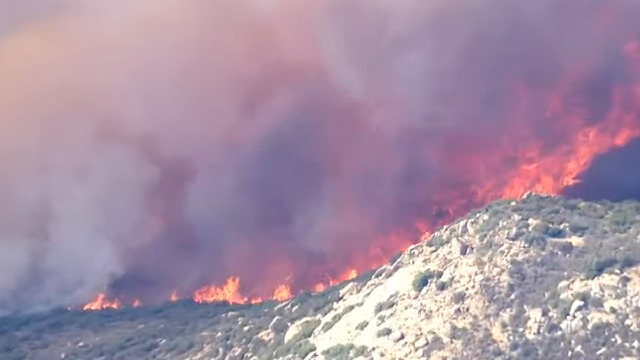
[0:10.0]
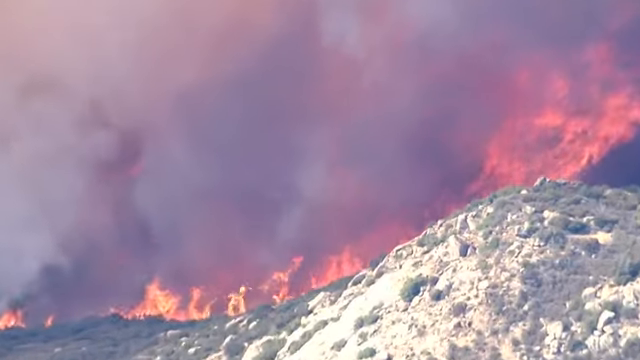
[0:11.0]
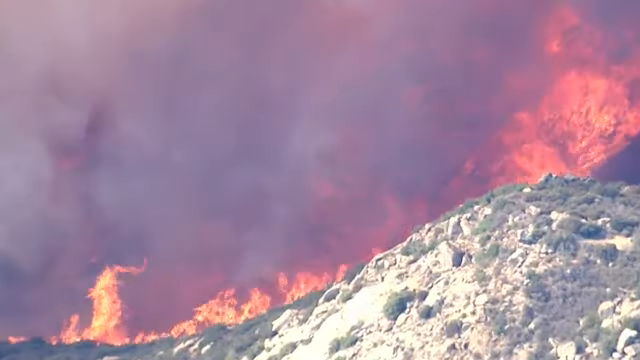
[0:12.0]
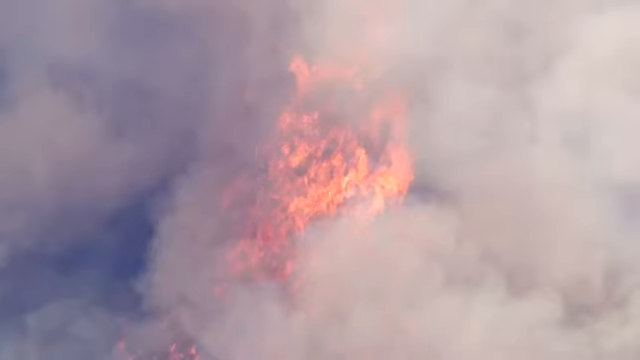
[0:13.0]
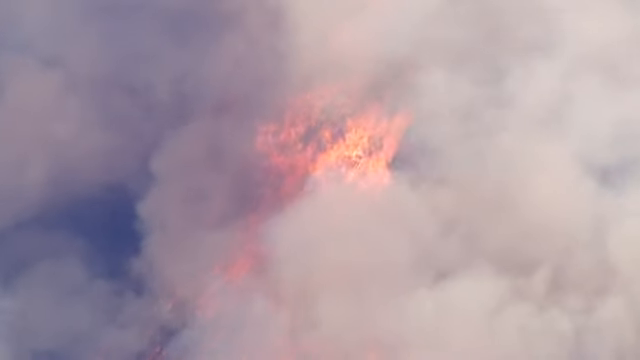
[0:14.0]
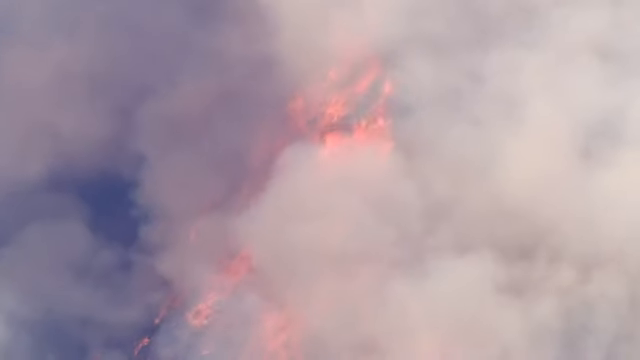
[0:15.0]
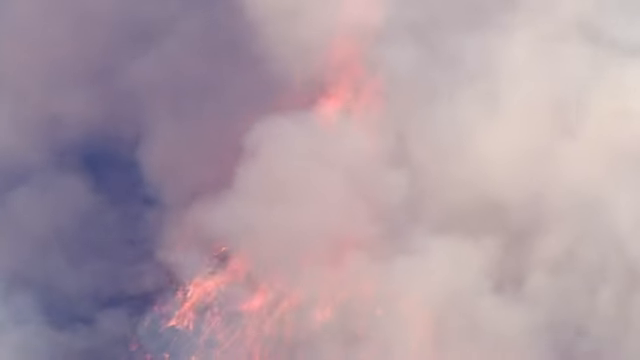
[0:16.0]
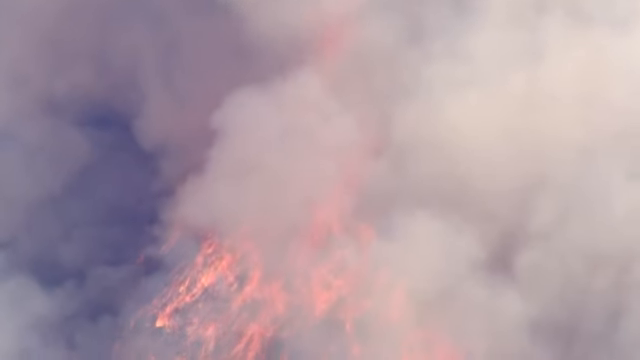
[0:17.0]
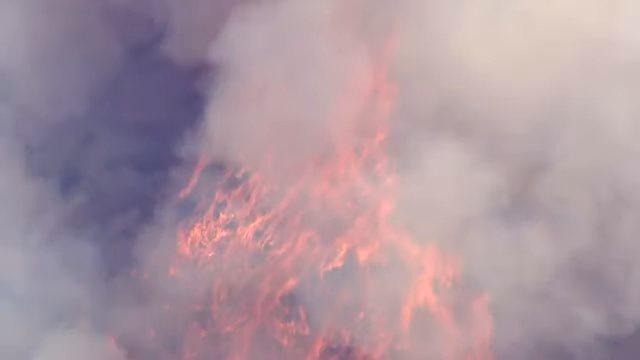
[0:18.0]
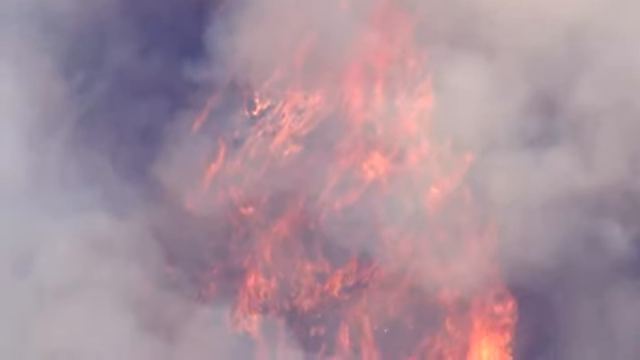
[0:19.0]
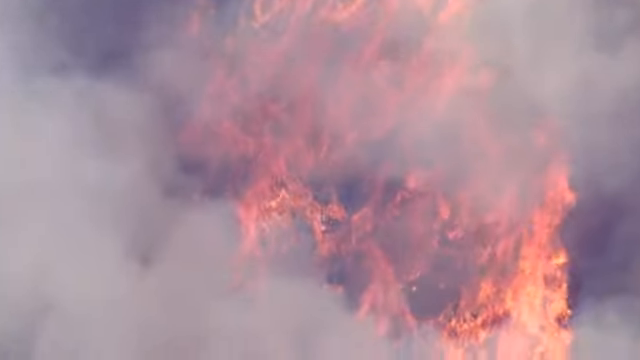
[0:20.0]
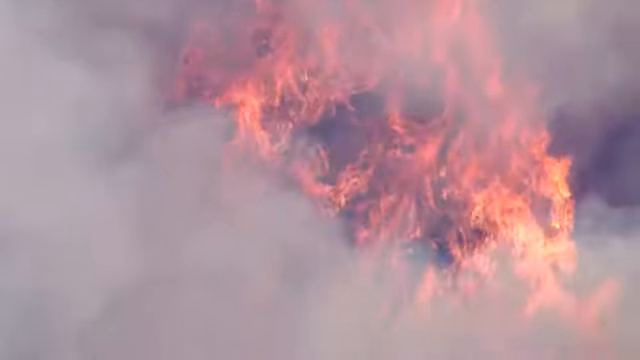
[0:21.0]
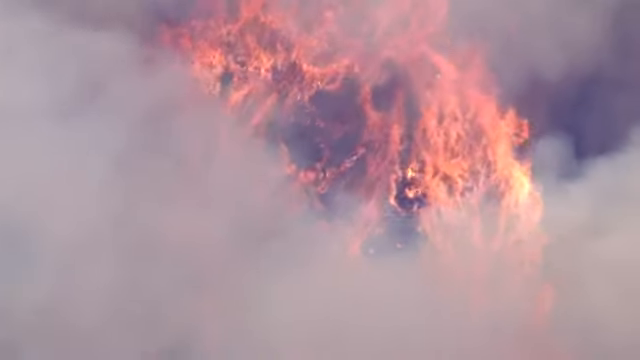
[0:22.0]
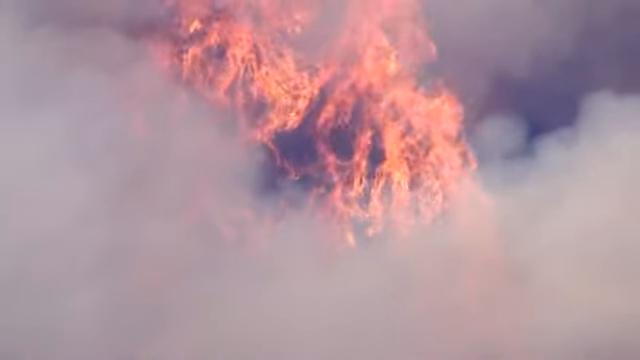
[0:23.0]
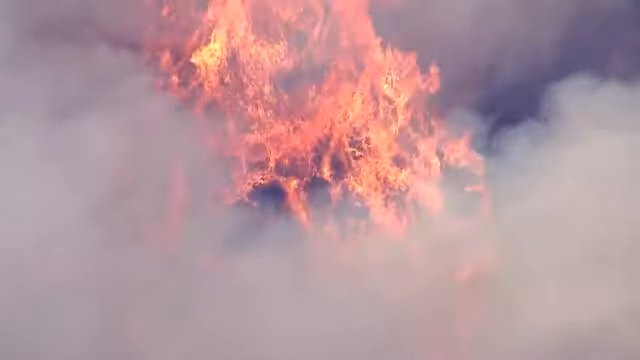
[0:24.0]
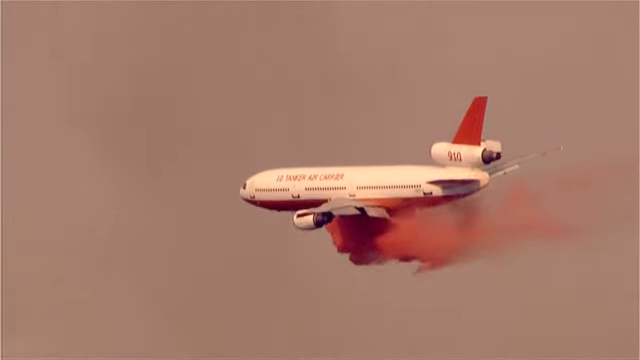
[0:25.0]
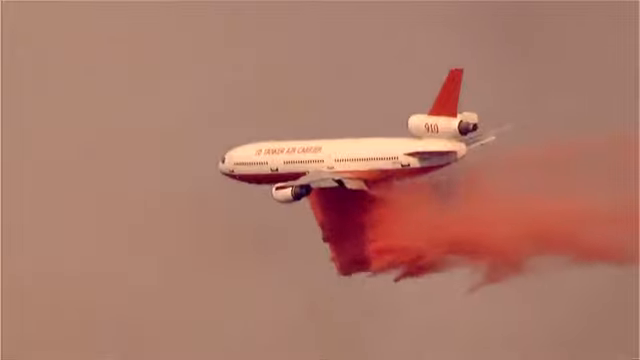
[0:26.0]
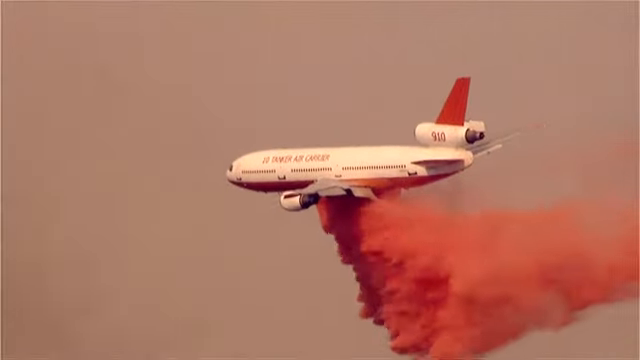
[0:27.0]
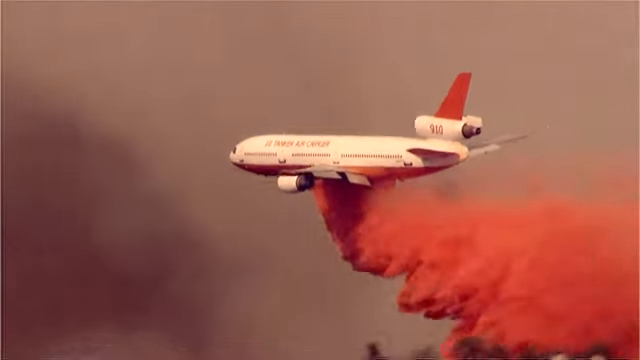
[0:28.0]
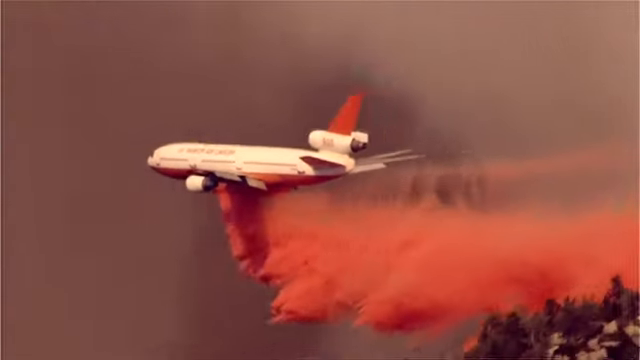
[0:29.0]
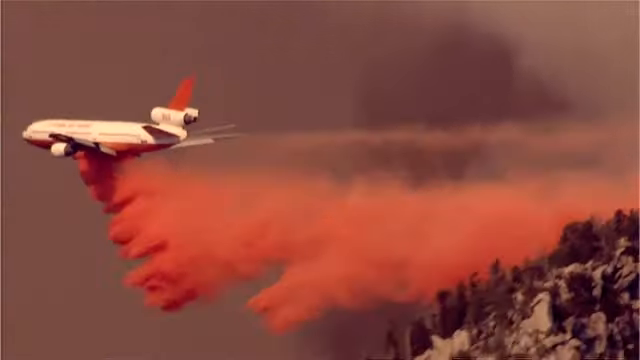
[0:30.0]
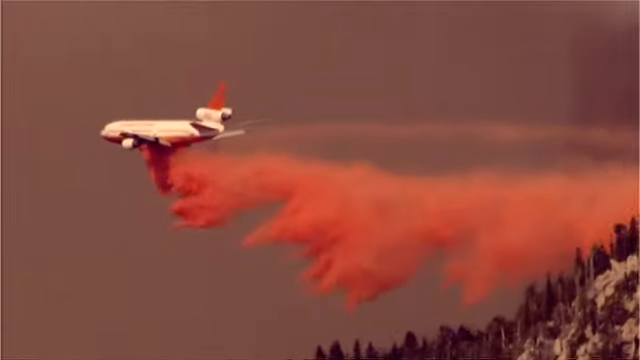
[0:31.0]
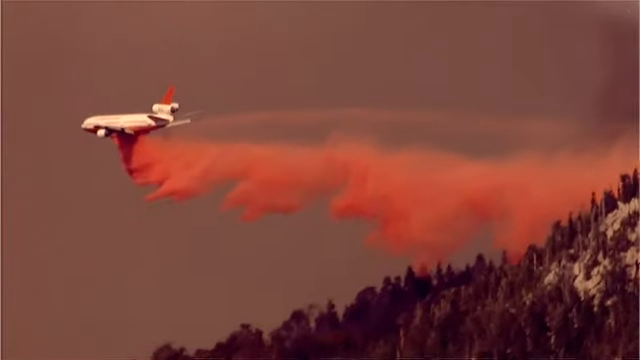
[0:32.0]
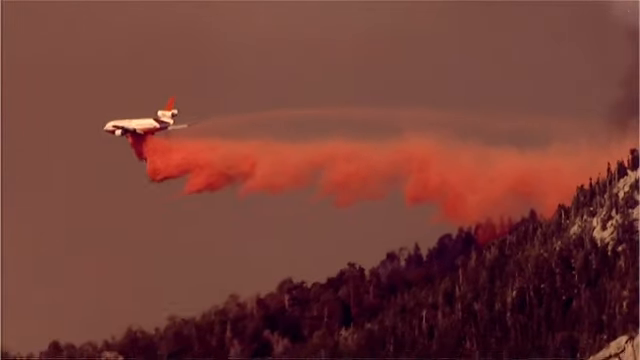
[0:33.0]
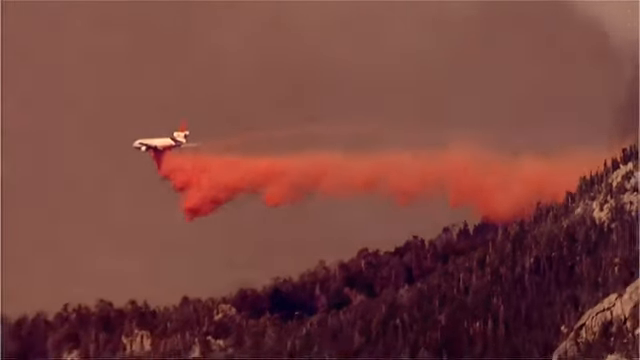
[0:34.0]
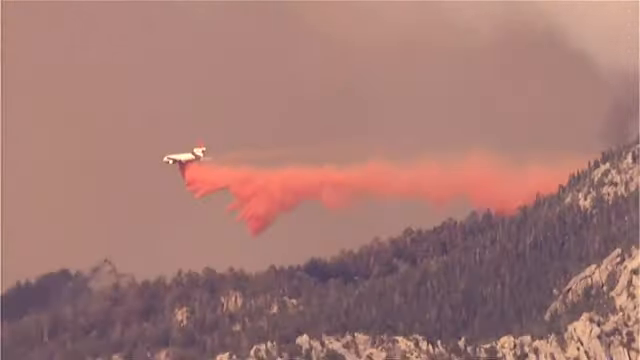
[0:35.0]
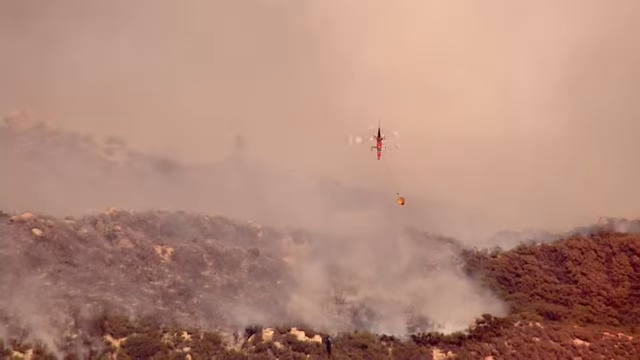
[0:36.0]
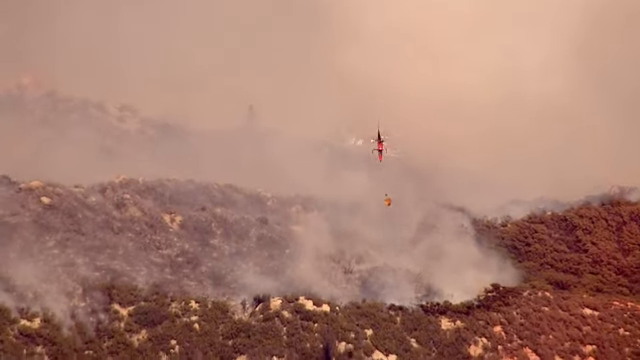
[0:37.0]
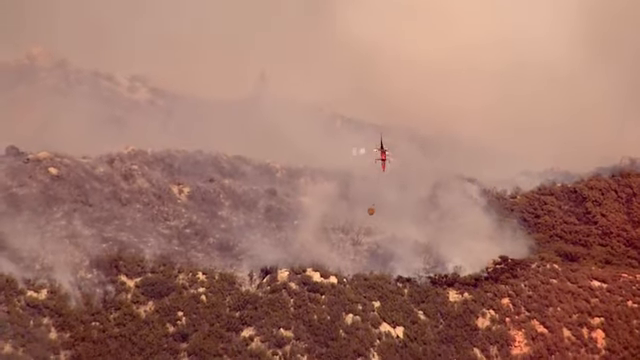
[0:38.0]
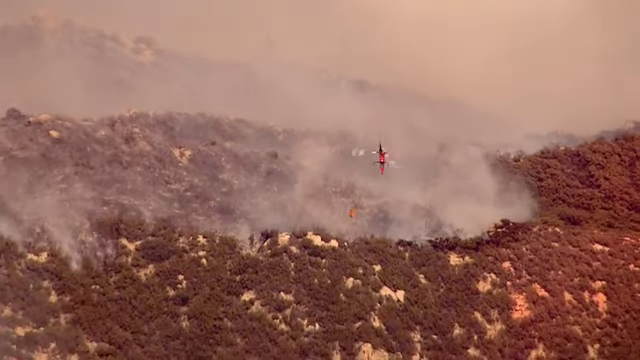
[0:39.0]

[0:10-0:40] A forest fire rages as the camera zooms in and the flames grow larger and larger. There is a lot of smoke, and the scene changes to pure smoke with some of the fire visible behind it. The camera pans down to show more of the flames and zooms in on flames shooting up into the air. Next, a large commercial airplane drops red powder out of its bottom as it flies forward through the fire and smoke. It drops the red powder on some trees and continues flying off to the left, releasing tons of the powder. The scene then changes to a helicopter flying overhead, holding what looks like a rope underneath it, possibly with some sort of rescue apparatus attached to the bottom. The scene then changes back to the fire.